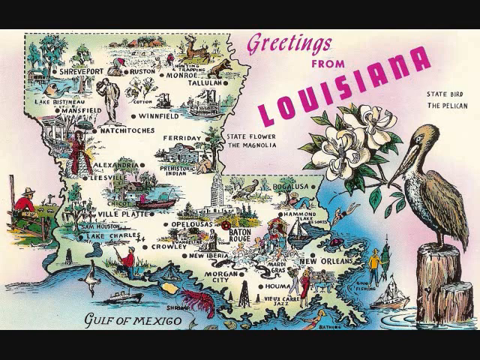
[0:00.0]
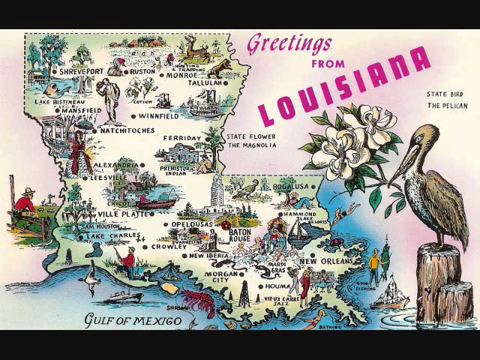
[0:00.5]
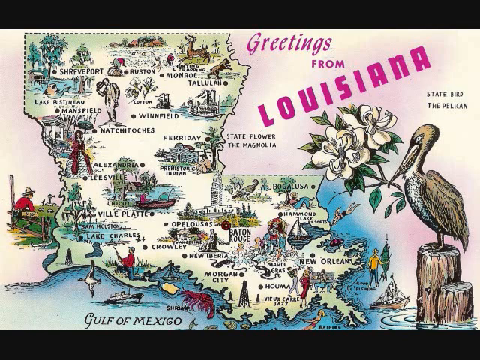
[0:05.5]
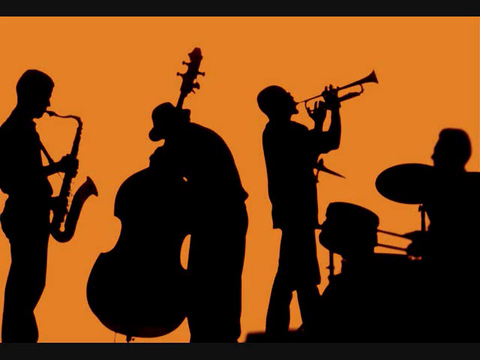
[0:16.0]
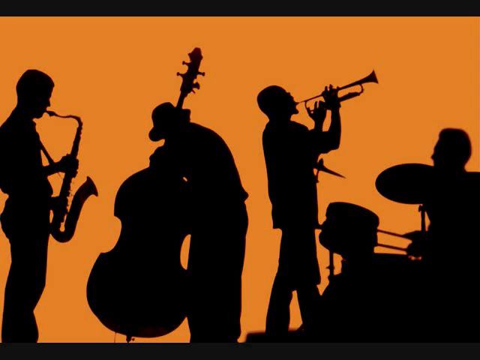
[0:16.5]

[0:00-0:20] A map of Louisiana carries the words "greeting from louisiana" in purple. There appears to be a picture of the state flower of Louisiana, and there is a picture of the state bird, the pelican, standing on what looks like a piece of wood. Inside the outline of Louisiana are different places. Baton Rouge is labeled, and Faraday shows a city. Alexandria shows a picture of a lady in a dress whose bottom is white and whose top is kind of red; she also has a red shirt on and seems to have an umbrella. Another place shows what looks like a symbol of a man with a hat on. Winfield shows what looks like a ship or something, and Baton Rouge shows something like a lighthouse. The Gulf of Mexico can kind of be seen on the map. Next comes a silhouette of a band: one man plays a trumpet, one has a saxophone, one has what seems to be a trombone, and one has a really big guitar that has to be held, apparently a cello.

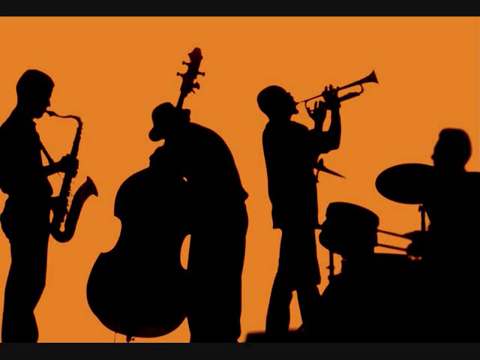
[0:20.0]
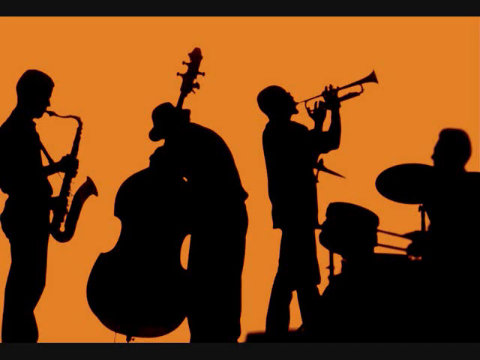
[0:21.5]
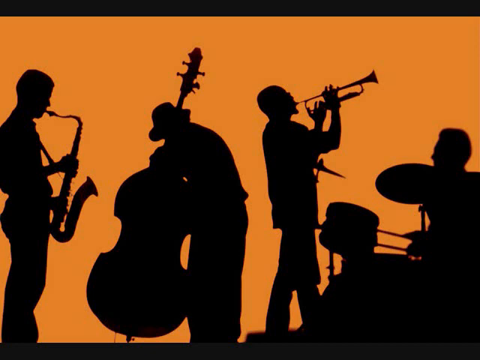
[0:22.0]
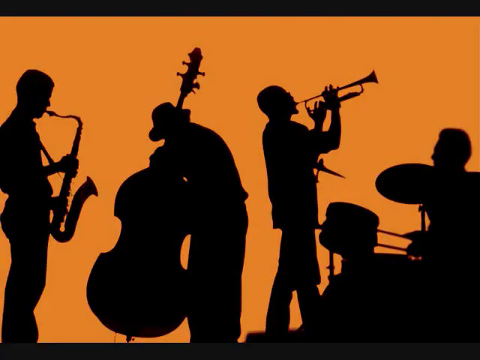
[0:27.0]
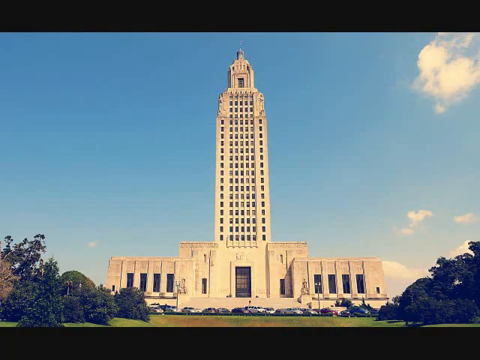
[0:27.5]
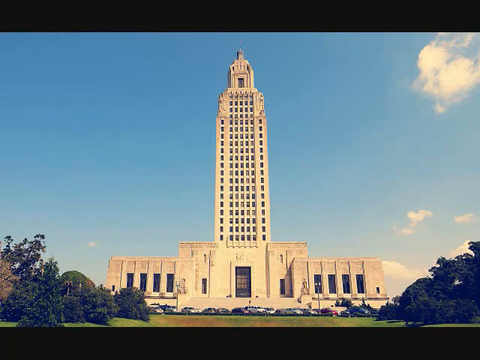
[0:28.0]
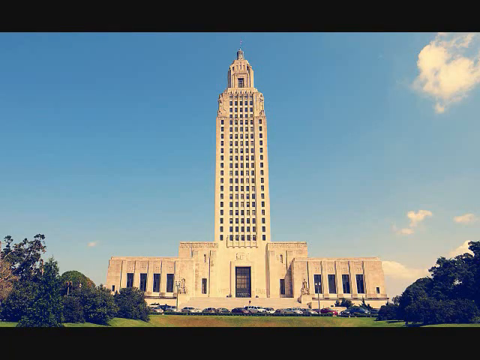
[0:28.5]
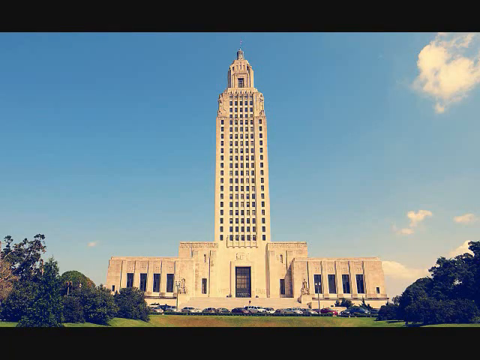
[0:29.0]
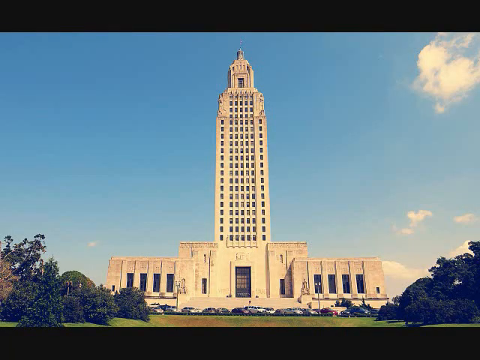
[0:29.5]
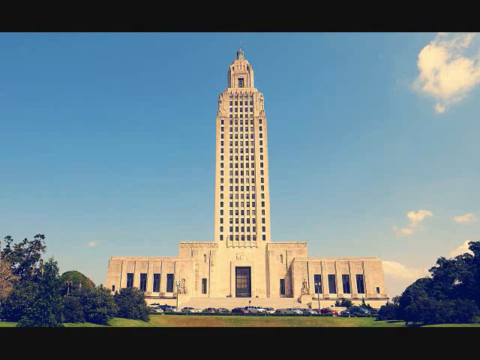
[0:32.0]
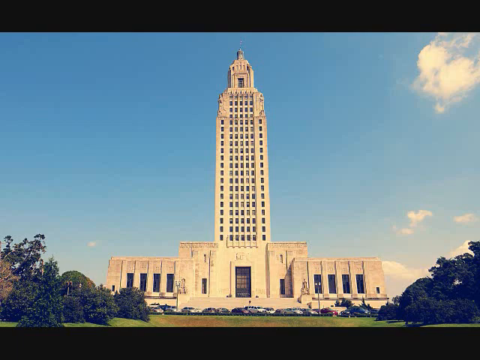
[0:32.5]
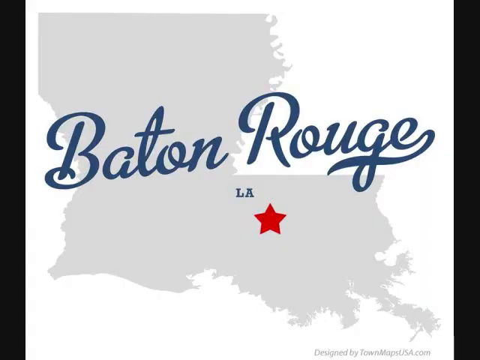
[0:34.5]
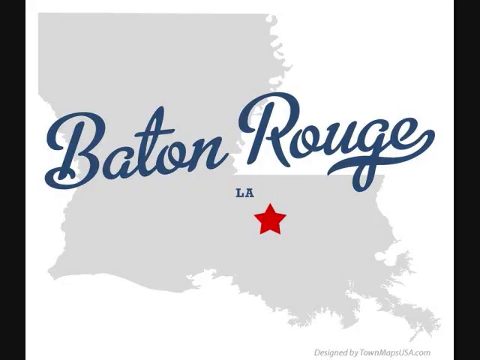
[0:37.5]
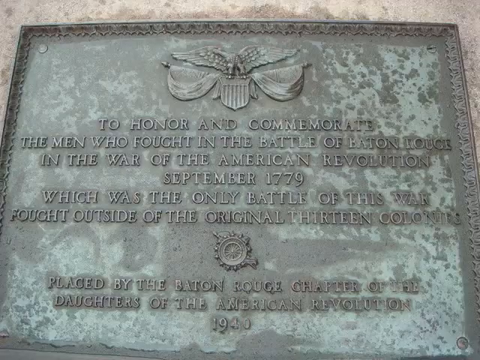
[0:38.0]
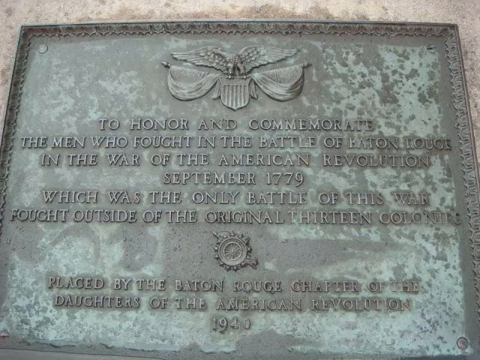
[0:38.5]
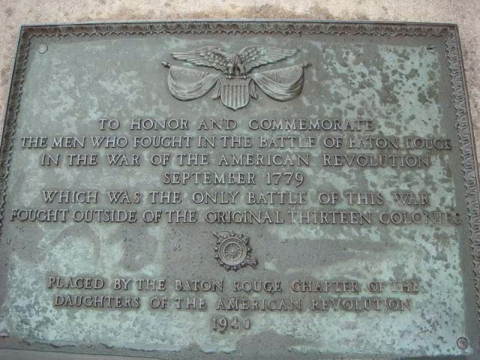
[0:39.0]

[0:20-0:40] A silhouette of a group of men, or musicians, plays music. One man plays a saxophone, another plays the drums, another looks like he is playing a trumpet or horn, and another plays a really big guitar that kind of looks like a cello. Then there is a picture of a really tall building that looks like it is on top of a monument, with a blue sky and a couple of clouds. Next comes a silhouette of the state of Louisiana with a red star where the capital, Baton Rouge, is; "Baton Rouge" is written in blue cursive. Then a stone monument appears, with text that says "to honor and commemorate the man who fought in the Battle of Baton Rouge in the War of the American Revolution, September 1779, which was the only battle of this war fought outside of the original 13 colonies."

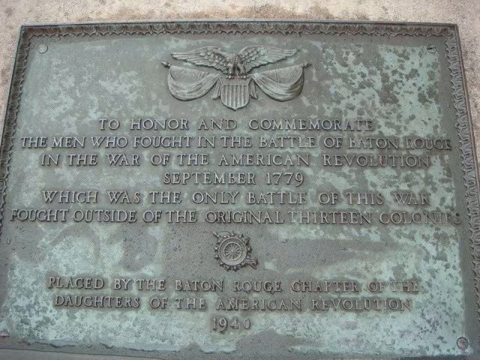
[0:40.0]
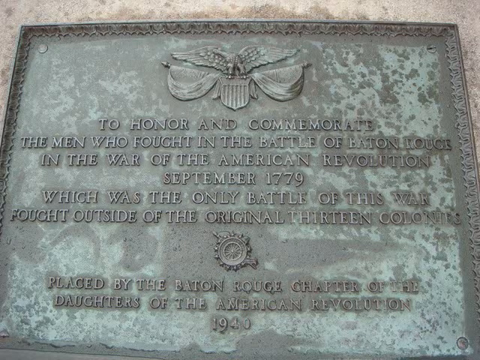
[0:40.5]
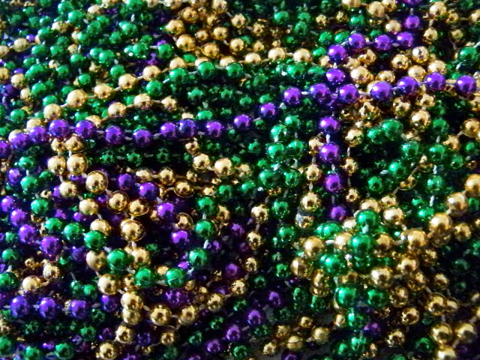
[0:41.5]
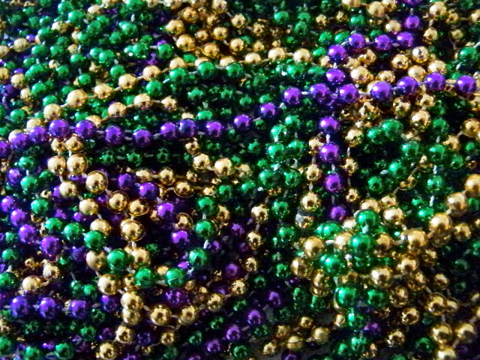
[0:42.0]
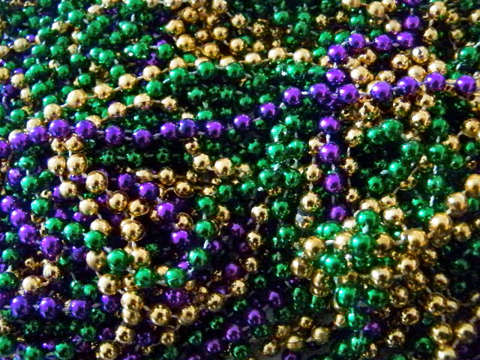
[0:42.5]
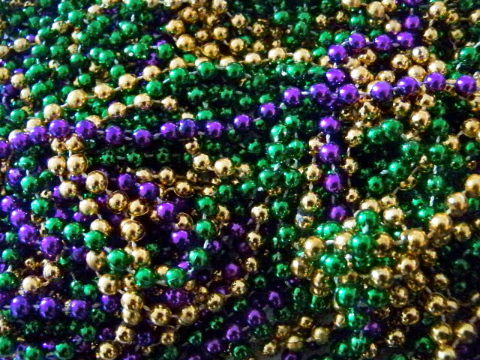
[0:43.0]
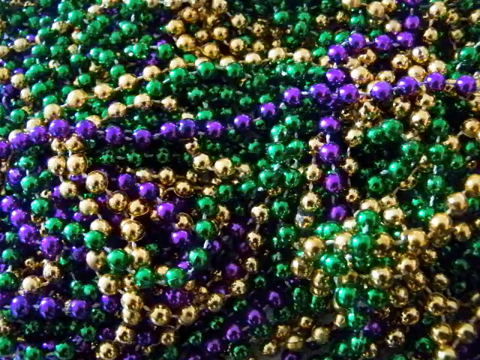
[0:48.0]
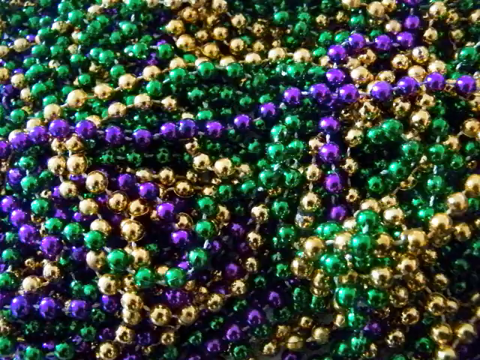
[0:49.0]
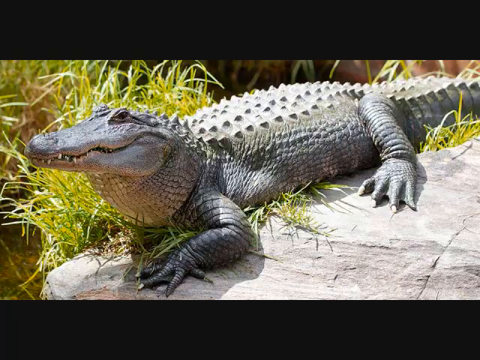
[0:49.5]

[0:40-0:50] A monument is shown that seems to be about the Baton Rouge war of 1776 and commemorating the soldiers. Next comes a ton of beads, some purple, some green and some gold, that look like Mardi Gras beads. Then a picture shows an alligator sitting on a bank, seemingly sunning itself. There is grass behind him, and he is really close to the water, sitting on what looks like a big rock. He looks more like a juvenile than a full-grown alligator: very big, but not completely fully grown. He may be in an enclosure; he has no scars on his body, so he looks like an alligator that may live in captivity.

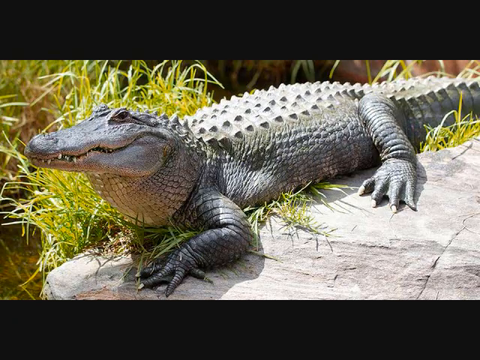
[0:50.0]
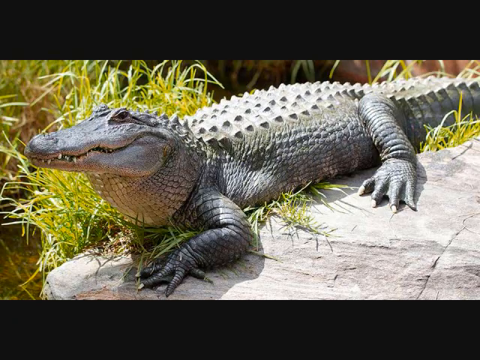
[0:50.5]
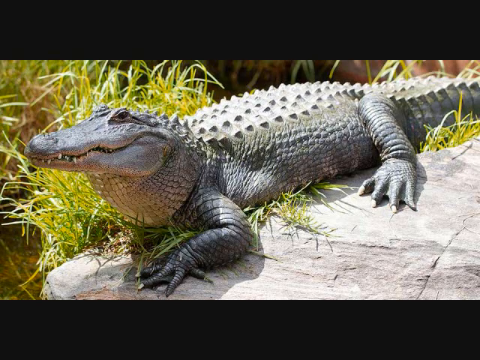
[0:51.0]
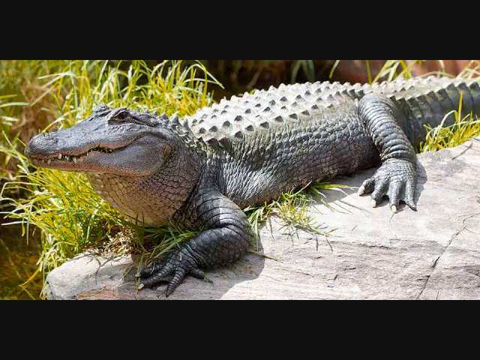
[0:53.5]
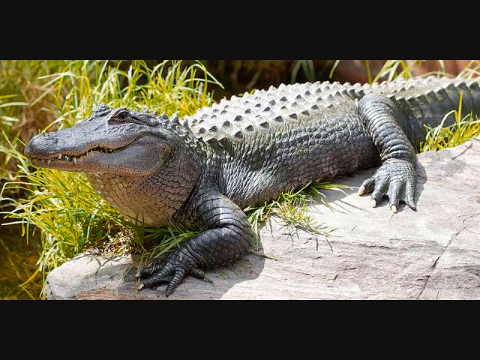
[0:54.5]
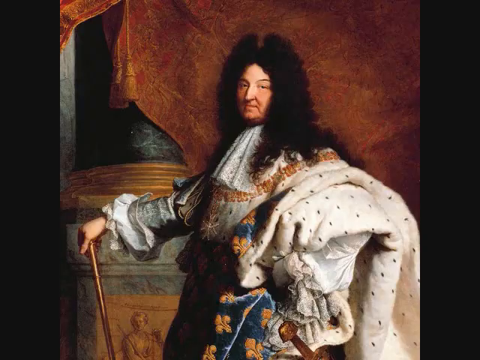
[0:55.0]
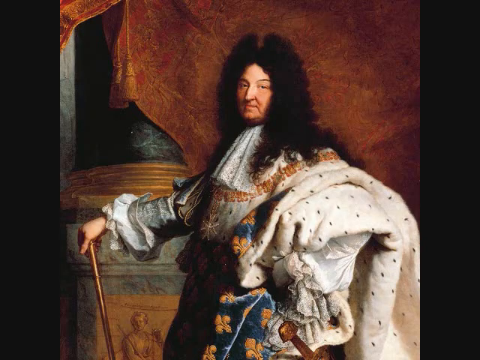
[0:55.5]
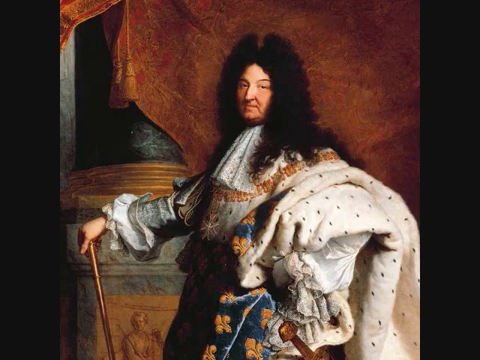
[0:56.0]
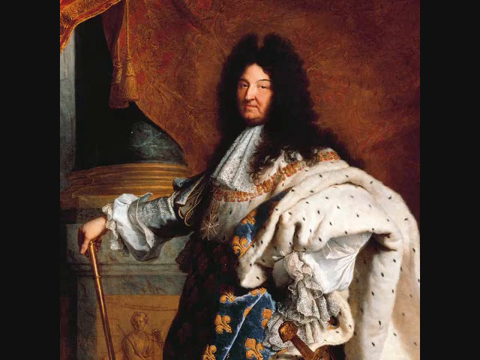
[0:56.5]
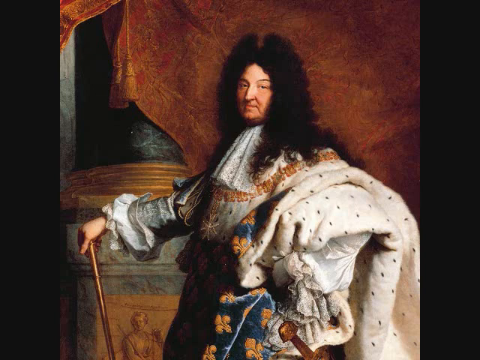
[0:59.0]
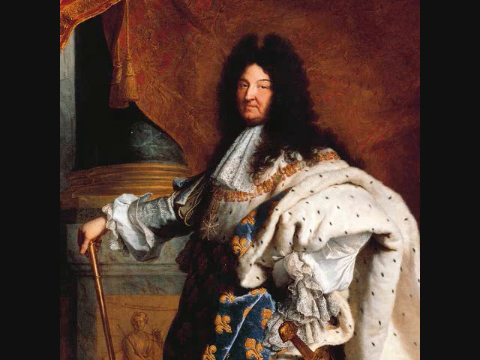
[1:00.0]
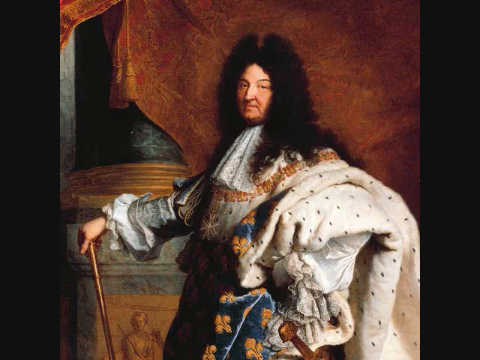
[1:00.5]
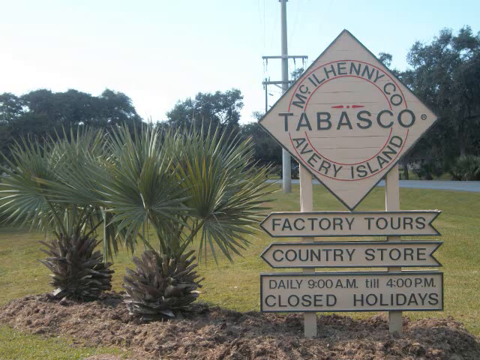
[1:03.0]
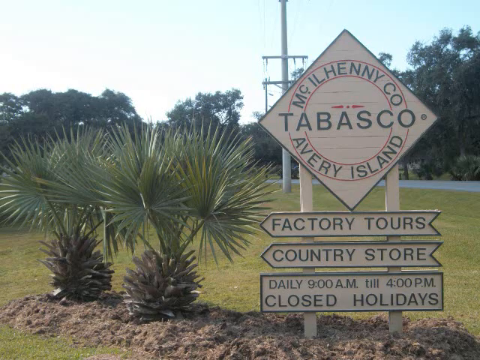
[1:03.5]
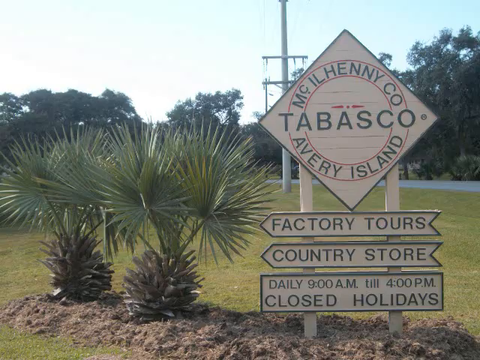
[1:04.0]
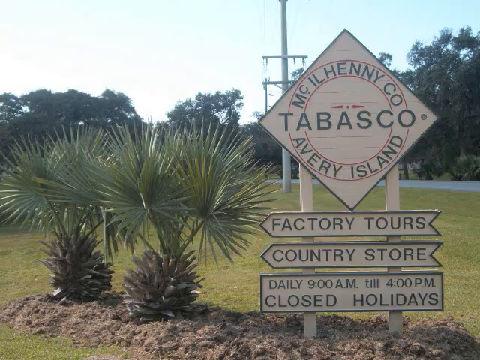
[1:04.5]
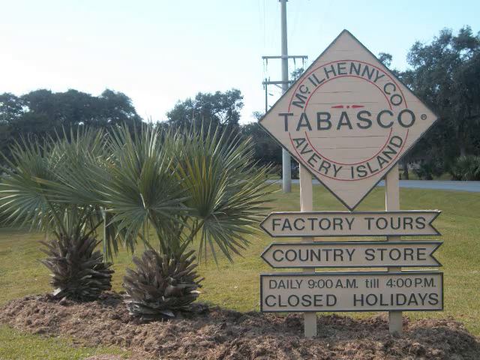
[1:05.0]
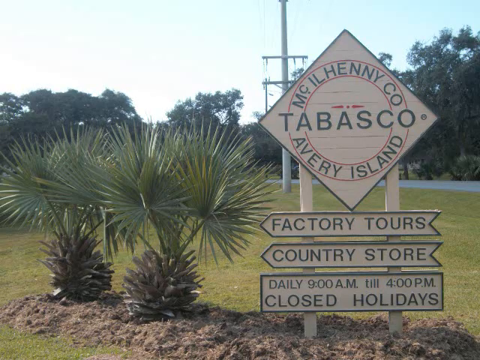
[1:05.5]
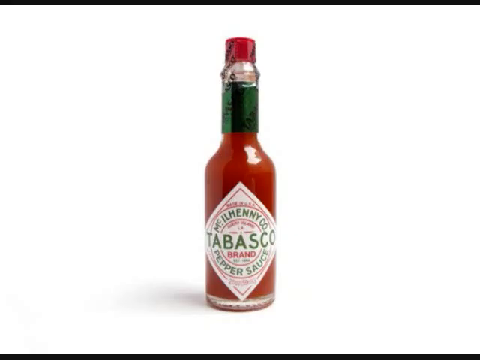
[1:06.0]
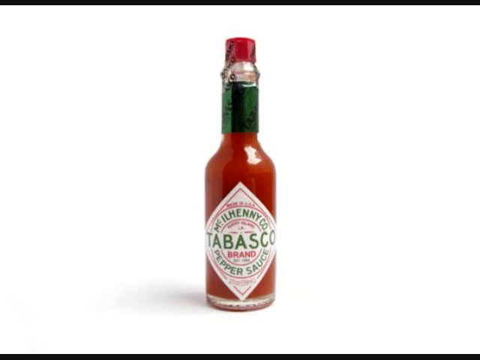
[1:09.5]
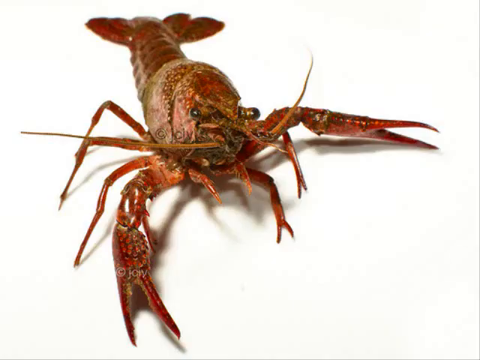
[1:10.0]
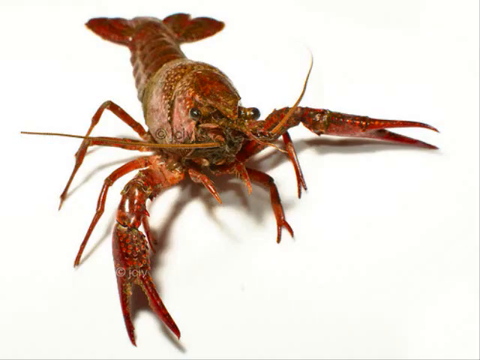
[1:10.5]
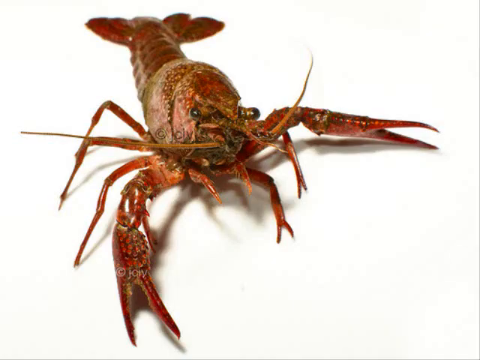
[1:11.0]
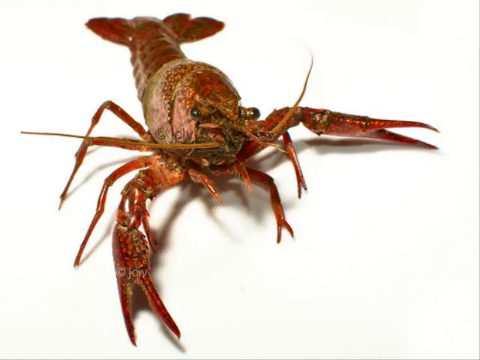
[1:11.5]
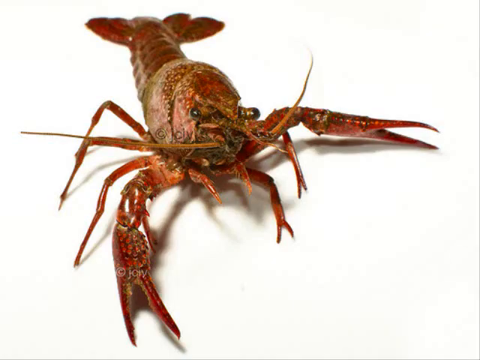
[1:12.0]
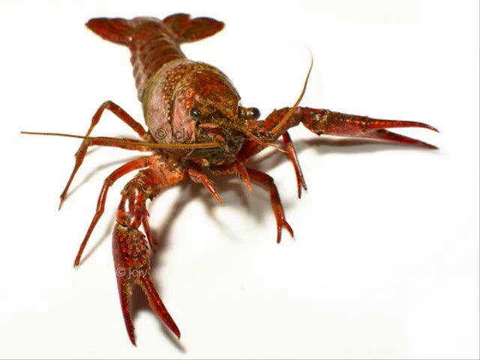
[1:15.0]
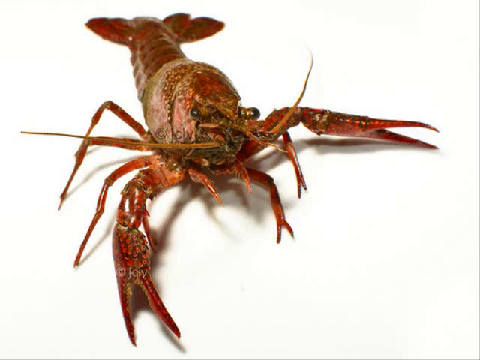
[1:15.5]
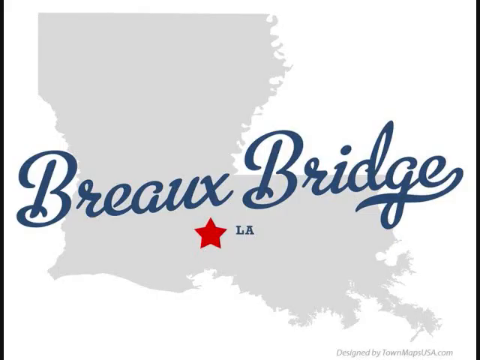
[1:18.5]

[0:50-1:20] A picture shows an American alligator sitting on a big rock, with grass around him, right near the water. He looks like maybe a young adult, but not fully grown. The alligator does look like he is in captivity and has no scars on him, and the grass does not really look like natural grass or grass that would be seen in Louisiana. Then a picture shows a Caucasian male, maybe from around the 1900s, wearing a black wig and many layers of clothing, like a king. He holds a king's staff and has a lot of frills around his neck. Next comes a picture of some Tabasco signs, apparently for a factory tour and a country store, giving the hours when it is open. Then there is a picture of Tabasco sauce, followed by a picture of a red crawdad that is pretty small.